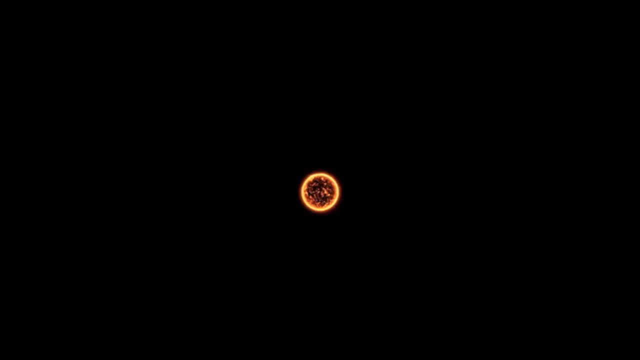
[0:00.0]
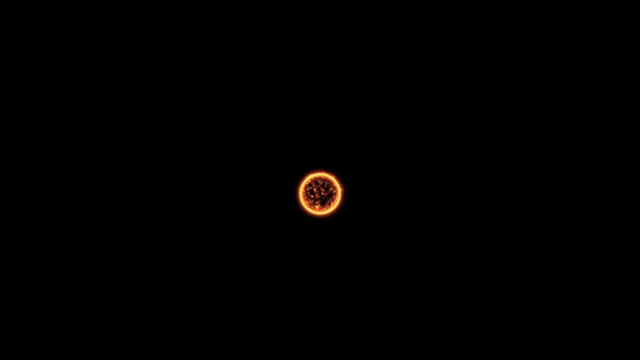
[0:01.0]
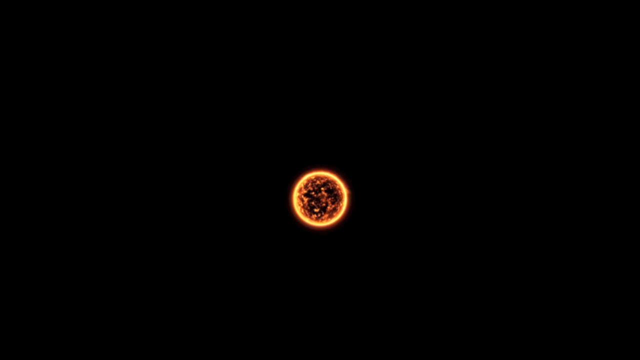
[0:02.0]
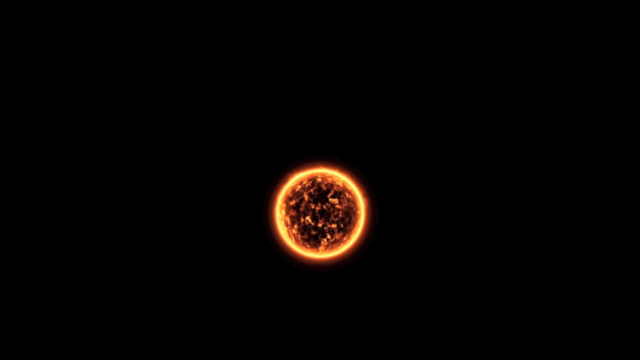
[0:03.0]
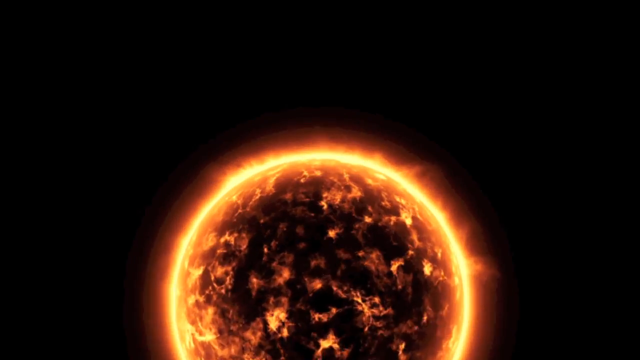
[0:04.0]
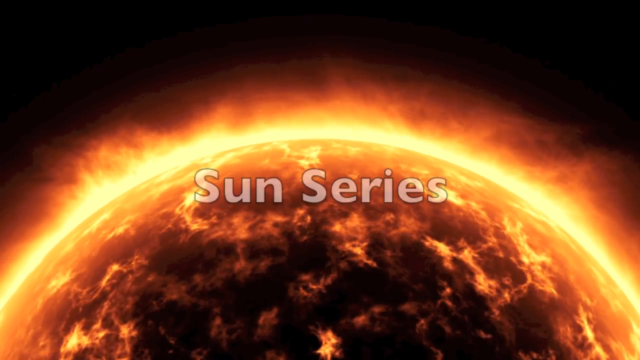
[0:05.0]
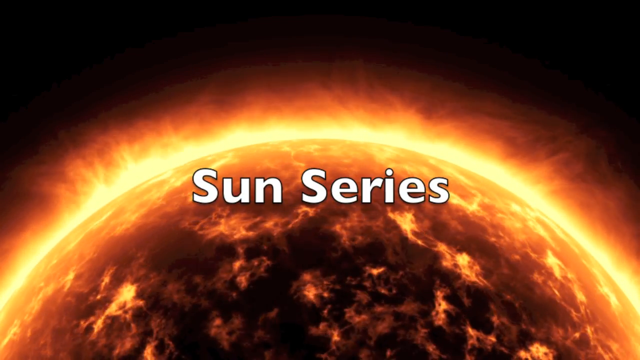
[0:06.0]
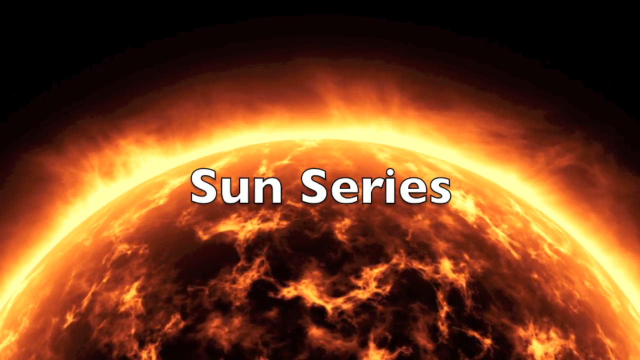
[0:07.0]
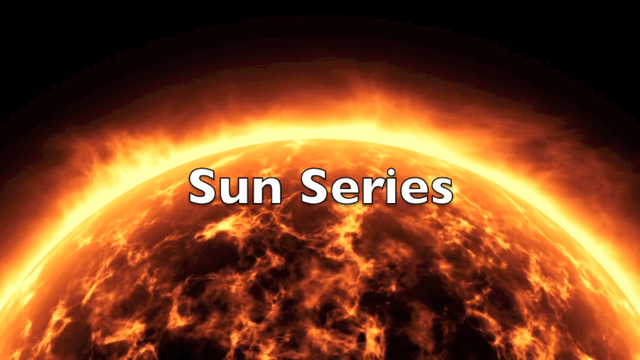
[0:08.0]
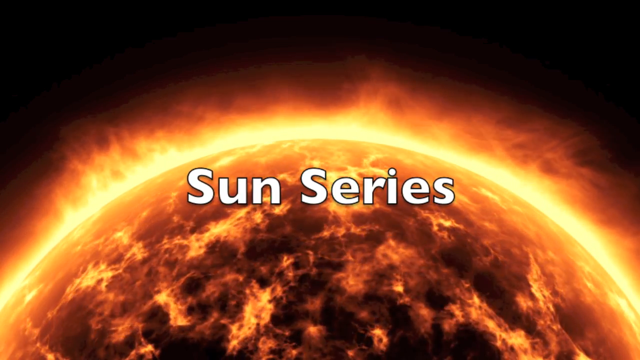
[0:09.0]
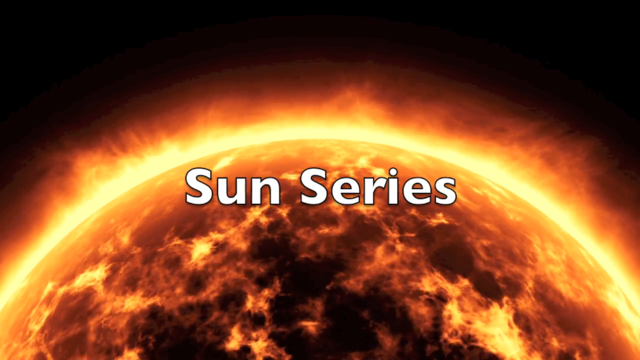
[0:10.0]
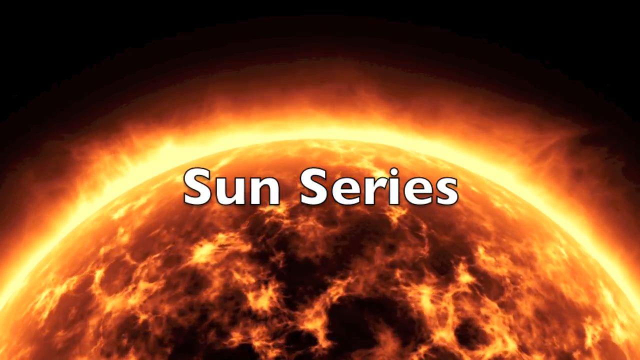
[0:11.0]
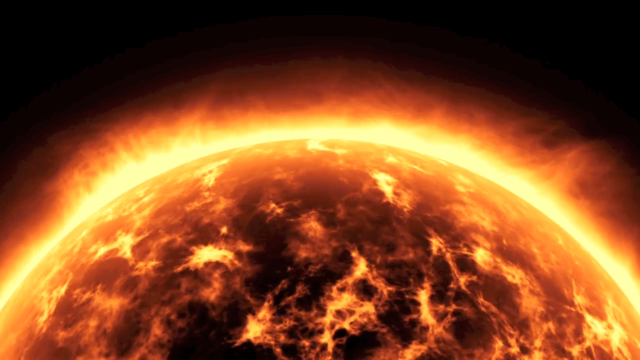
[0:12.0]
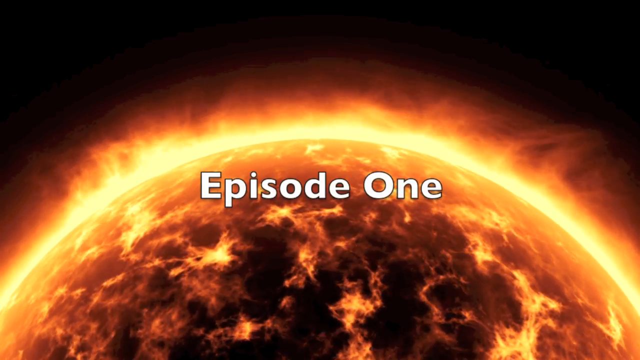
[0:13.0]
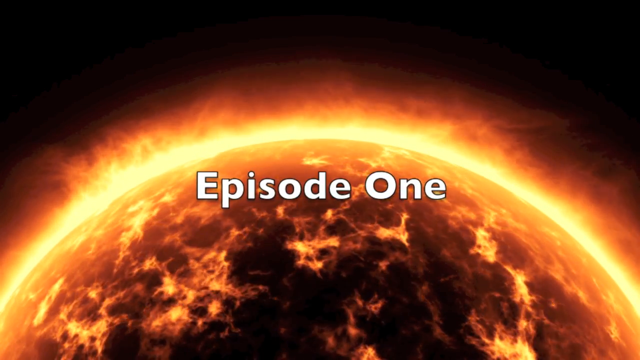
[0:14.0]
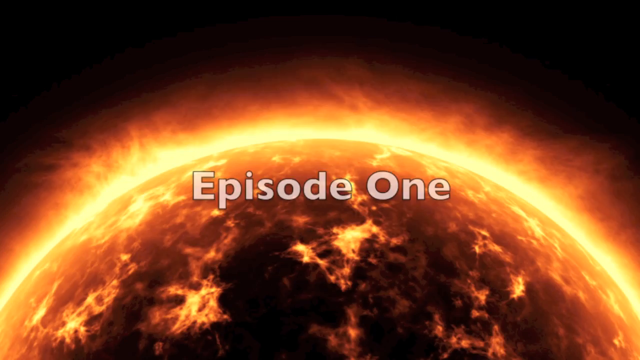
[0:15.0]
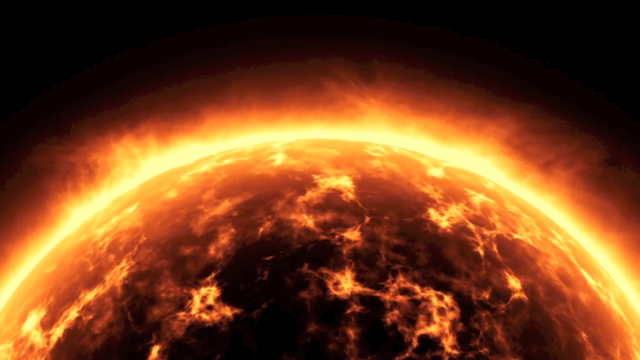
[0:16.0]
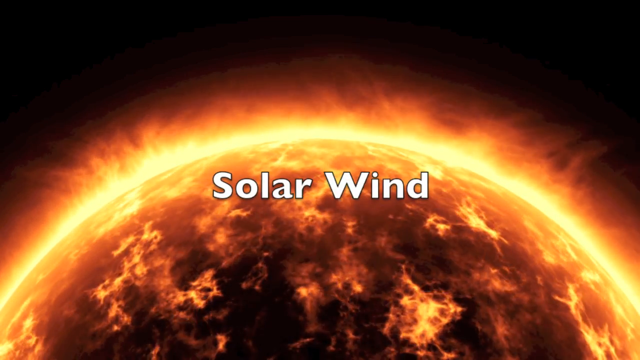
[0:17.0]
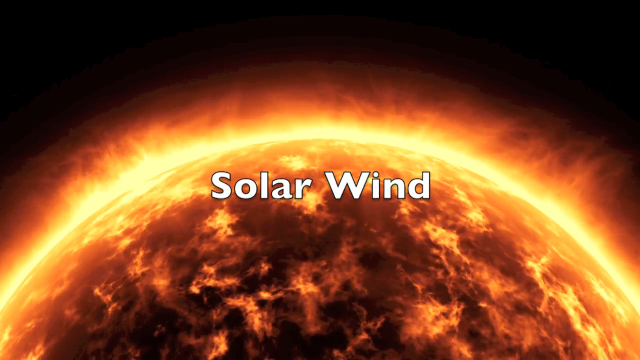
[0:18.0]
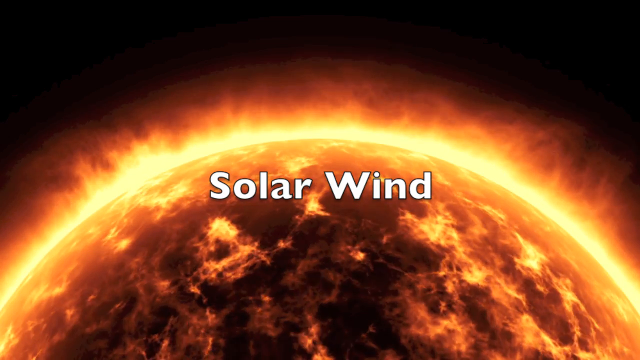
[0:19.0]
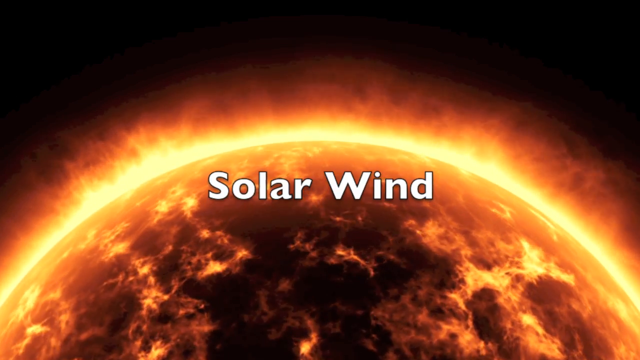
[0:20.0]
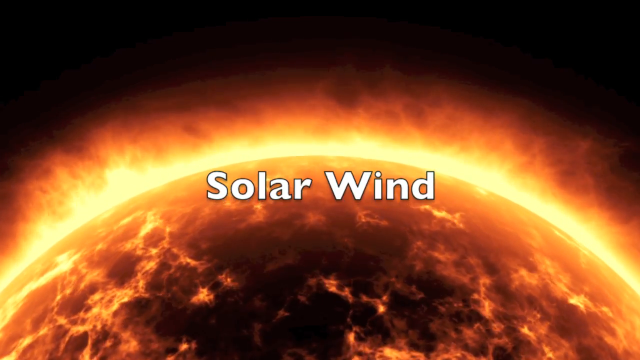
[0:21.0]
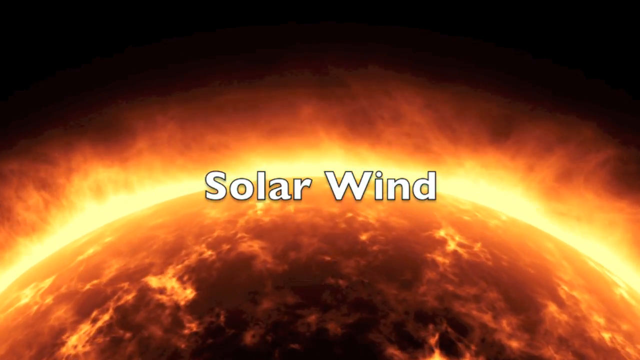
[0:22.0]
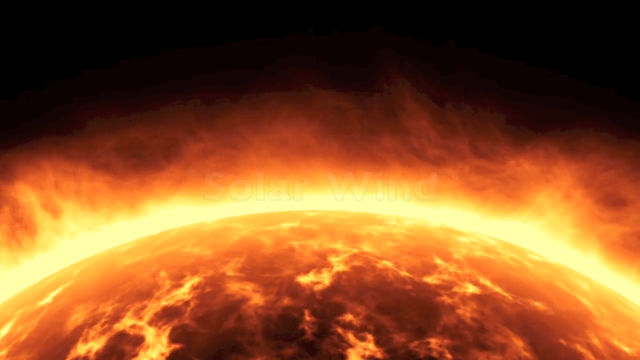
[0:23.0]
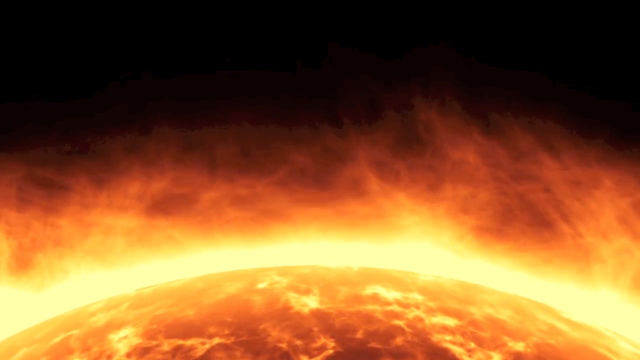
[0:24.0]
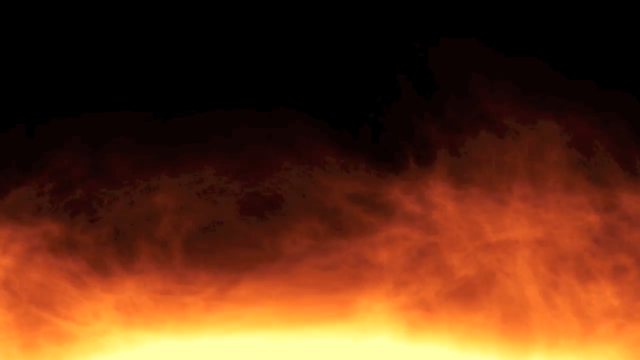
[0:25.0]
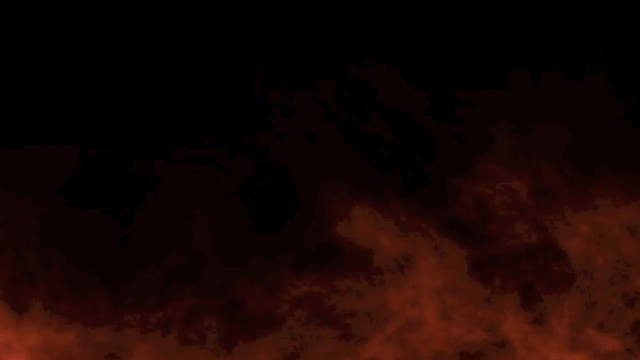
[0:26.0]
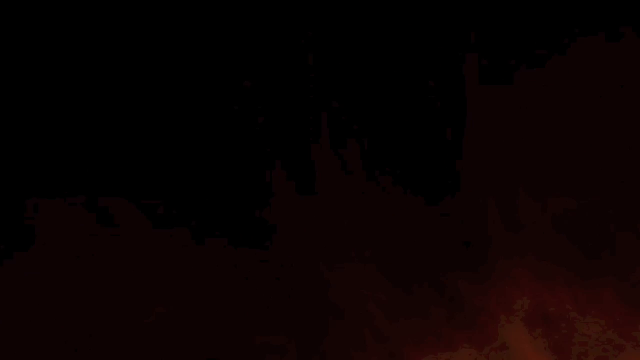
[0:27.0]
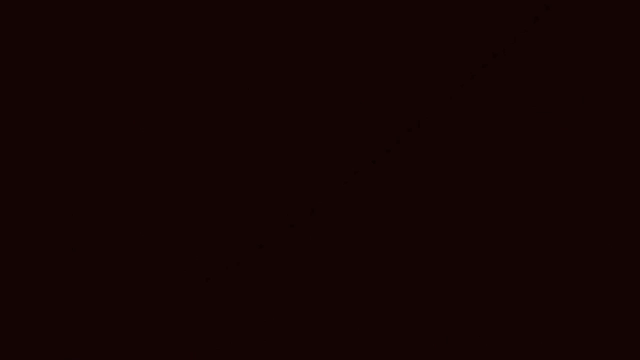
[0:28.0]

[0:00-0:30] Against a large black background, what appears to be an orange and black star, or even the sun, sits in the very center. The video slowly zooms in on it, and the sphere, glowing black and orange, grows bigger and bigger. Suddenly the sphere takes up half the screen and white title text appears on top of the sun, reading "Sun Series." That text disappears and new text appears reading "Episode 1. Solar wind." The background still displays the top half of the sun as the video zooms in and pans upward, and the text "Solar Wind" disappears. Eventually the screen turns black, then quickly flashes yellow as what seems to be the sun takes up the majority of the screen. On its left edge are multiple white lines and flashes, and on the right side there are multiple small white spots on top of the sun.